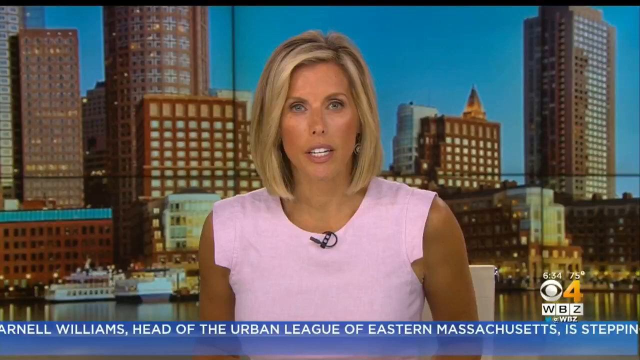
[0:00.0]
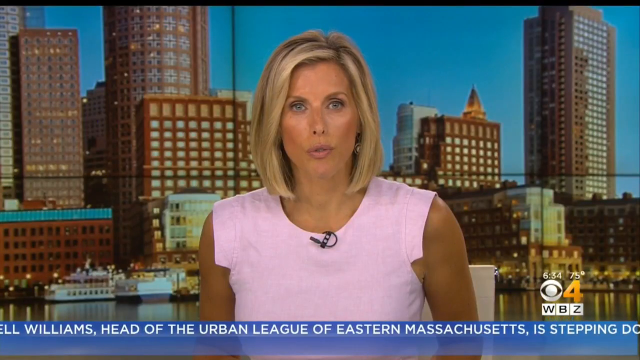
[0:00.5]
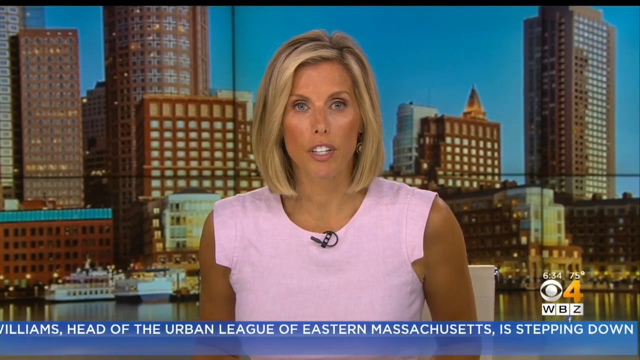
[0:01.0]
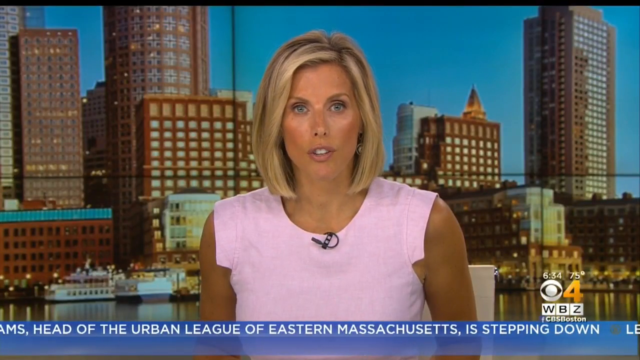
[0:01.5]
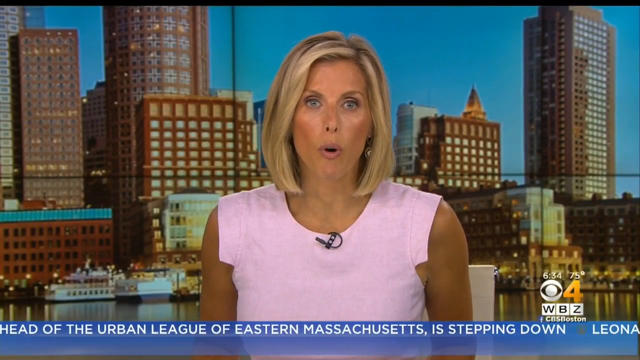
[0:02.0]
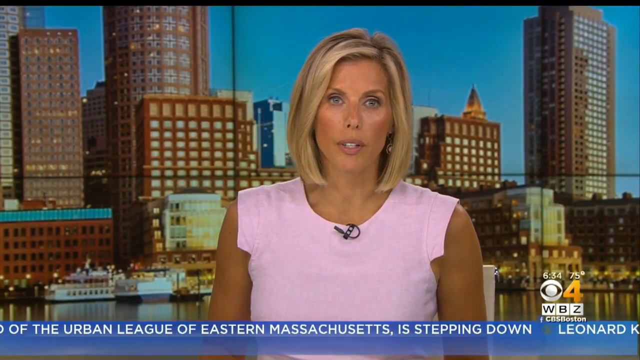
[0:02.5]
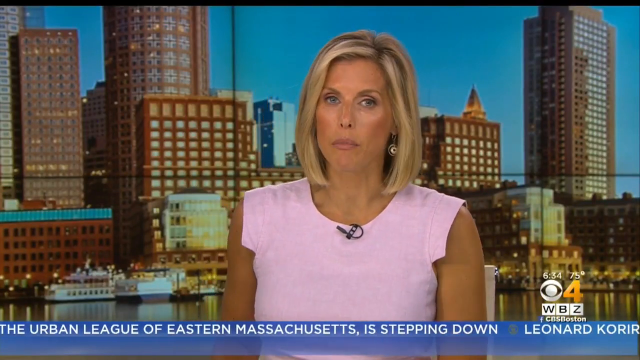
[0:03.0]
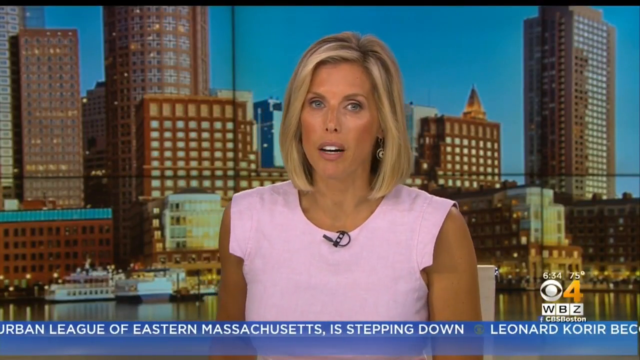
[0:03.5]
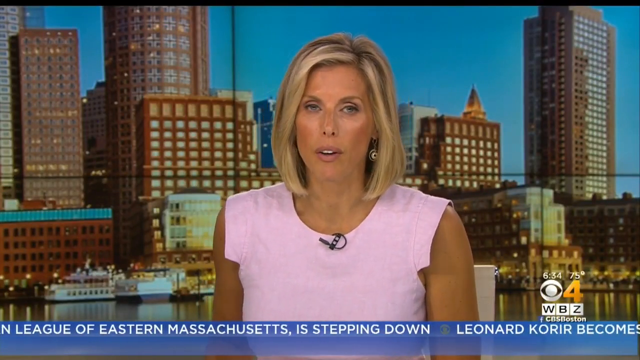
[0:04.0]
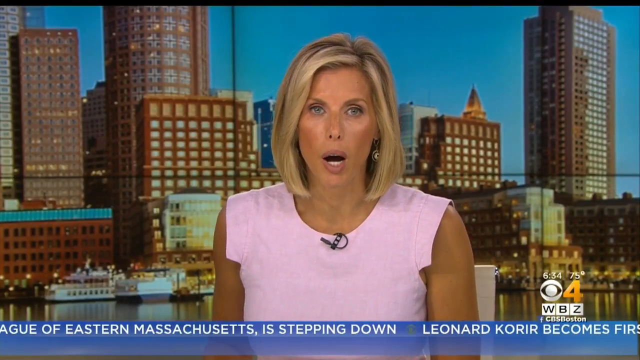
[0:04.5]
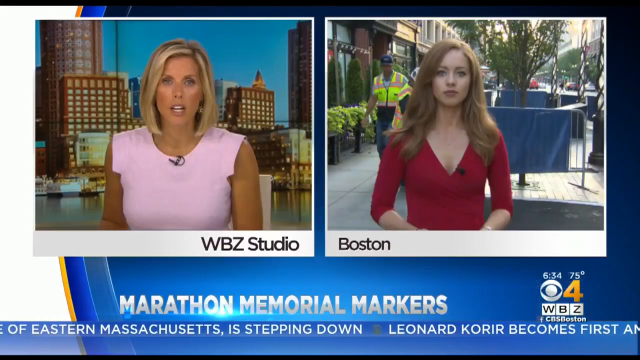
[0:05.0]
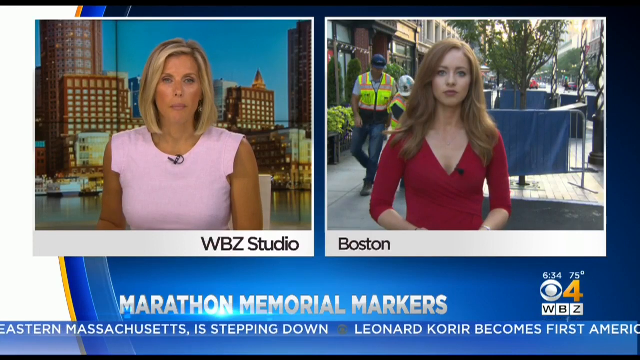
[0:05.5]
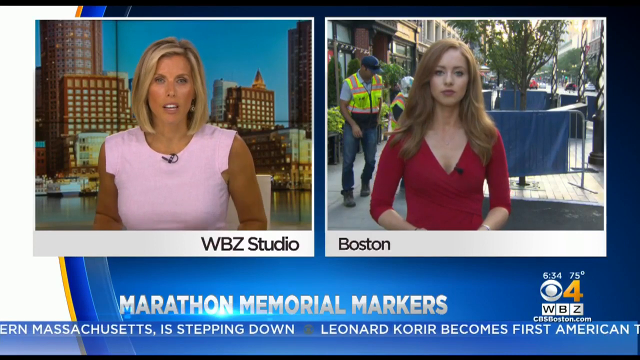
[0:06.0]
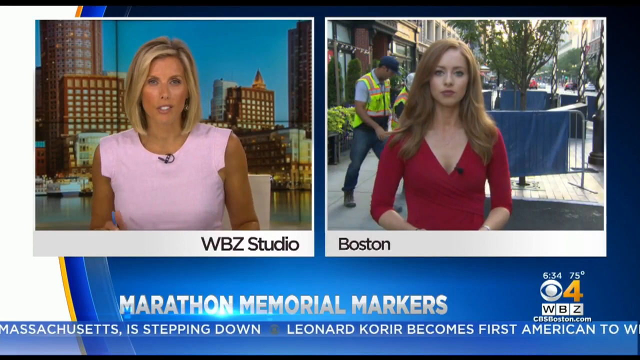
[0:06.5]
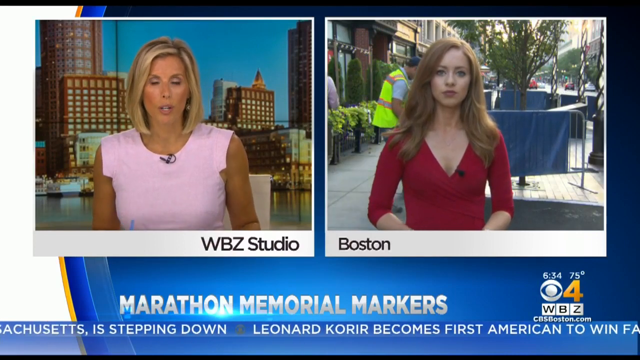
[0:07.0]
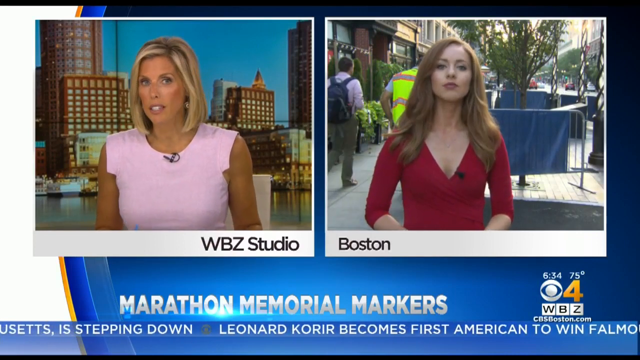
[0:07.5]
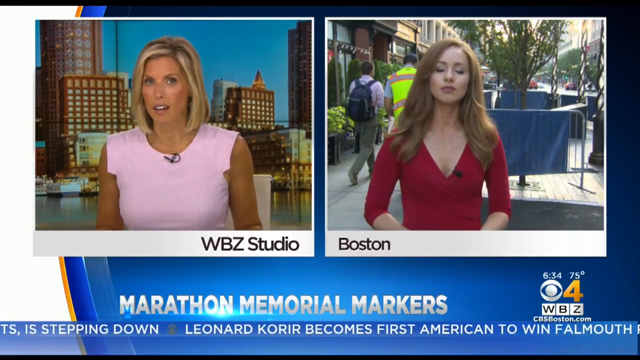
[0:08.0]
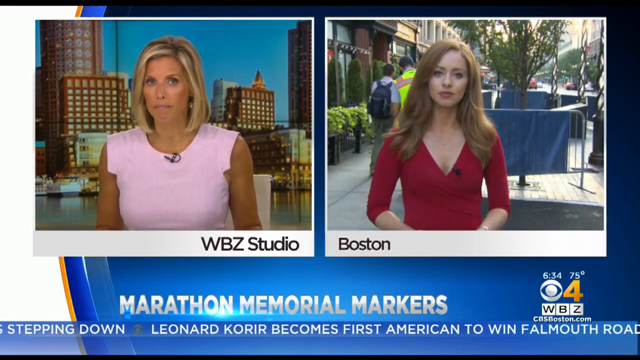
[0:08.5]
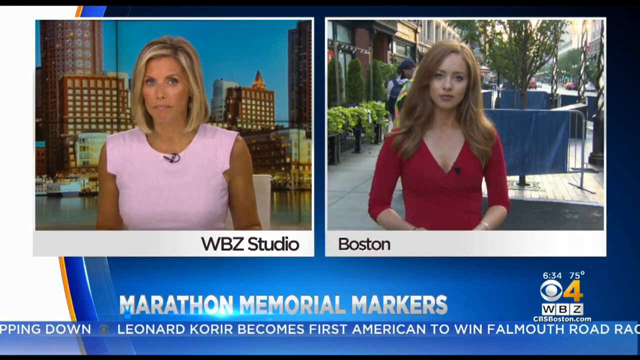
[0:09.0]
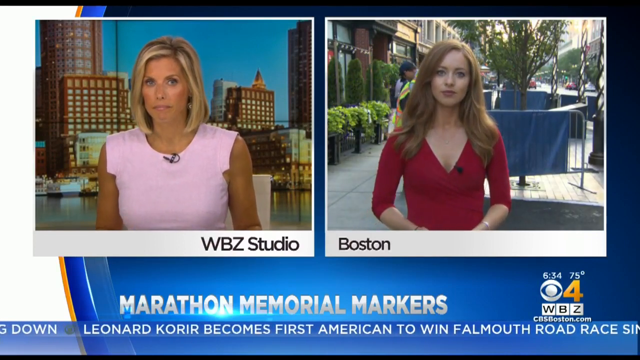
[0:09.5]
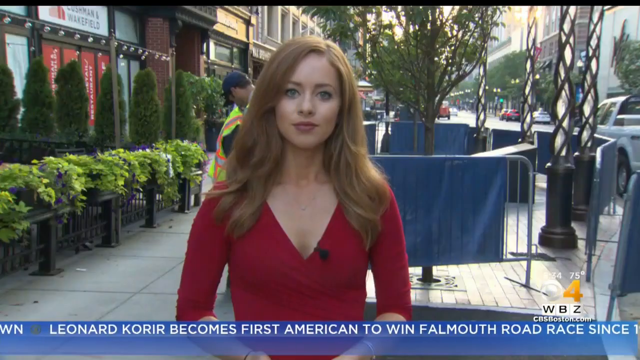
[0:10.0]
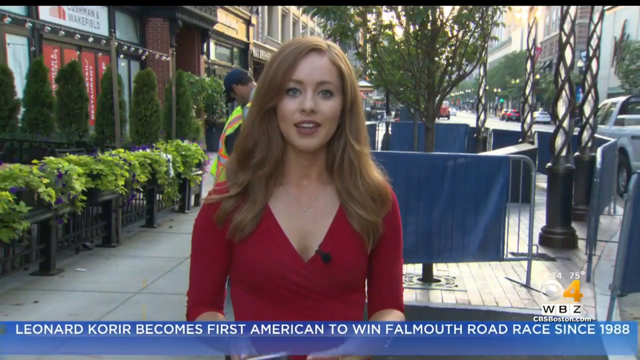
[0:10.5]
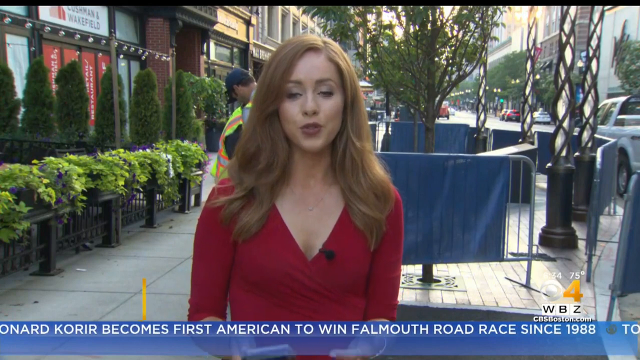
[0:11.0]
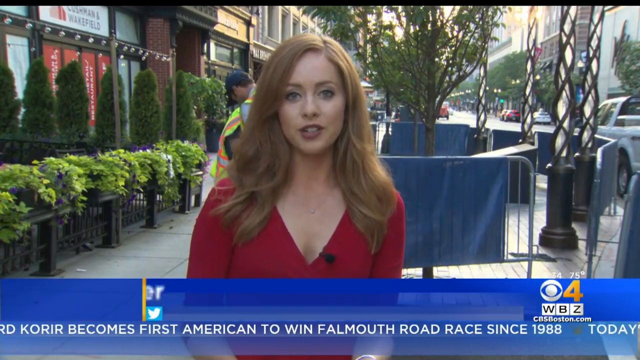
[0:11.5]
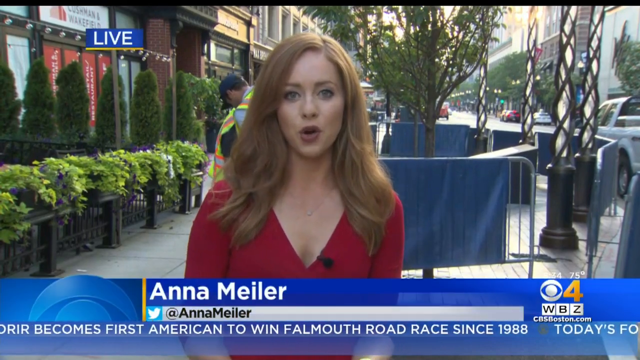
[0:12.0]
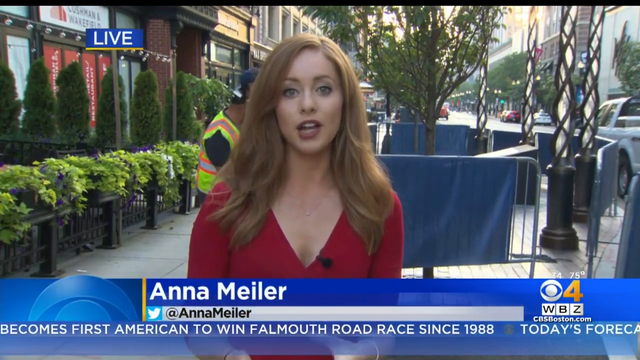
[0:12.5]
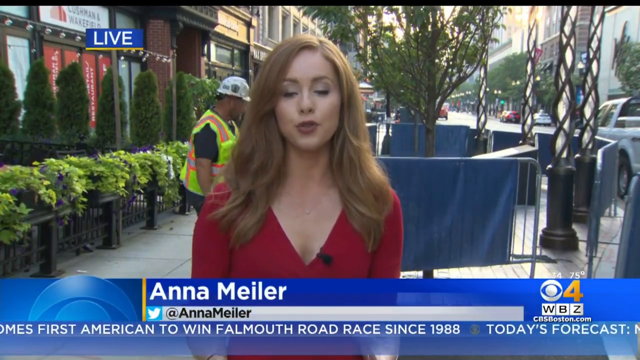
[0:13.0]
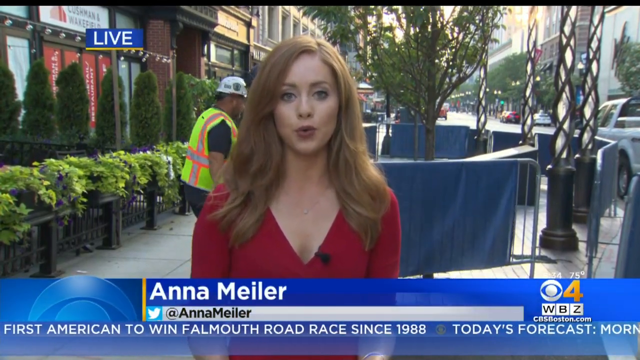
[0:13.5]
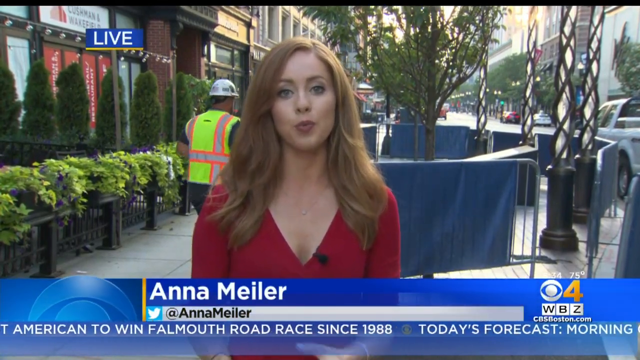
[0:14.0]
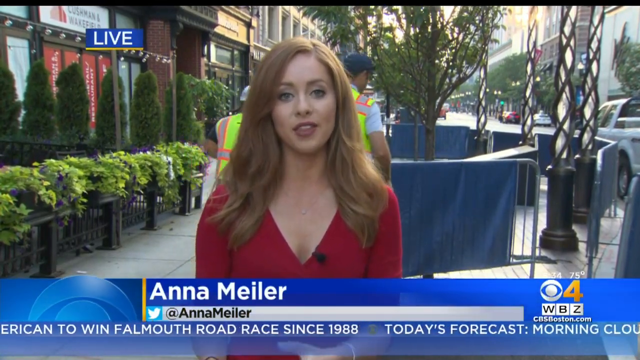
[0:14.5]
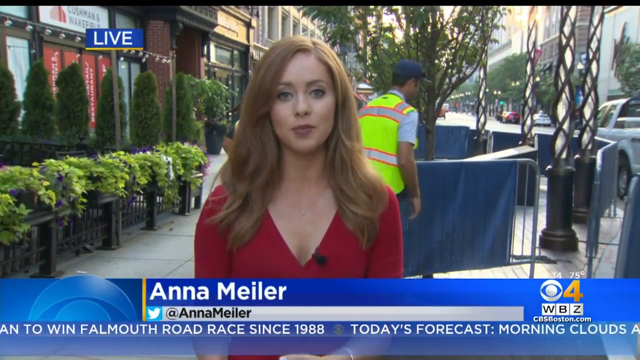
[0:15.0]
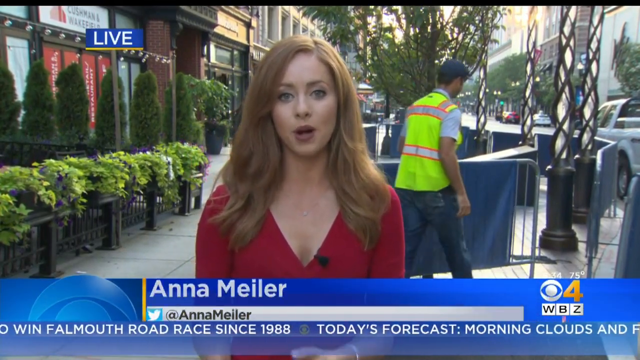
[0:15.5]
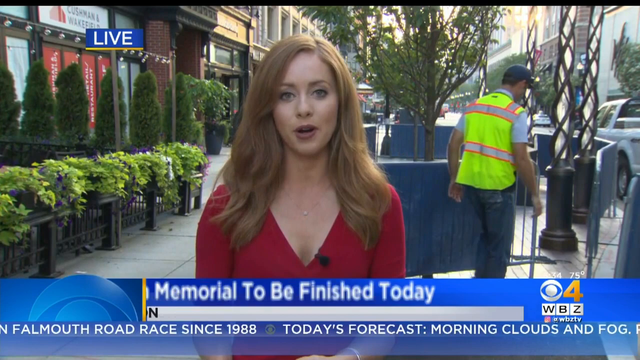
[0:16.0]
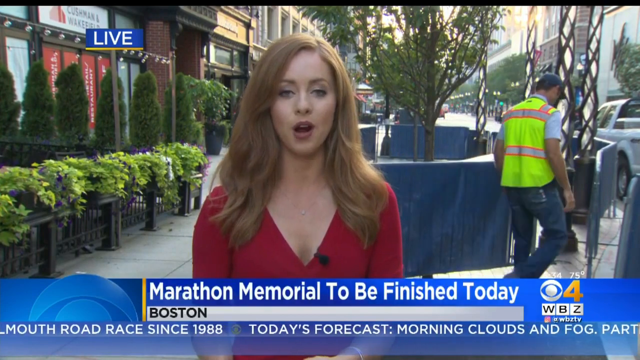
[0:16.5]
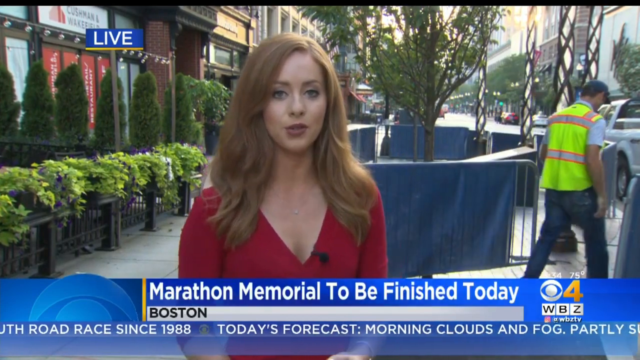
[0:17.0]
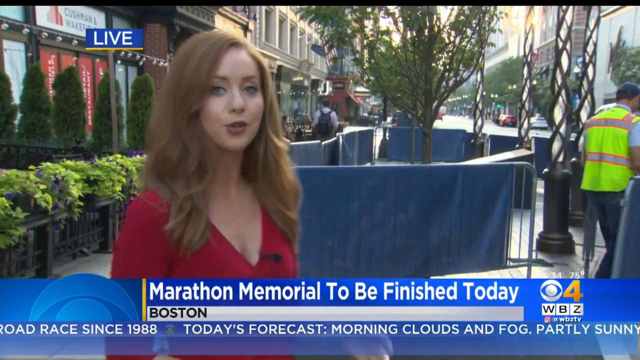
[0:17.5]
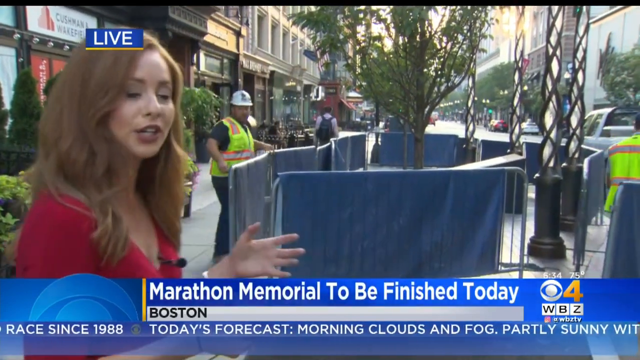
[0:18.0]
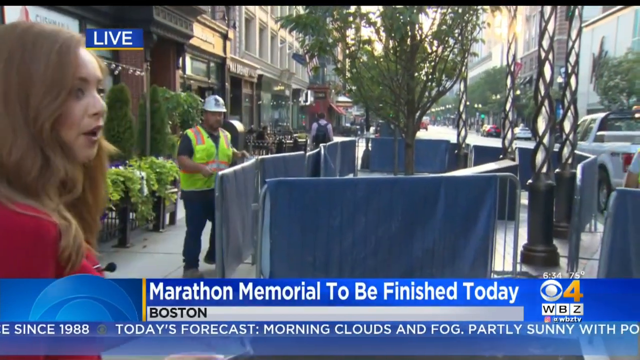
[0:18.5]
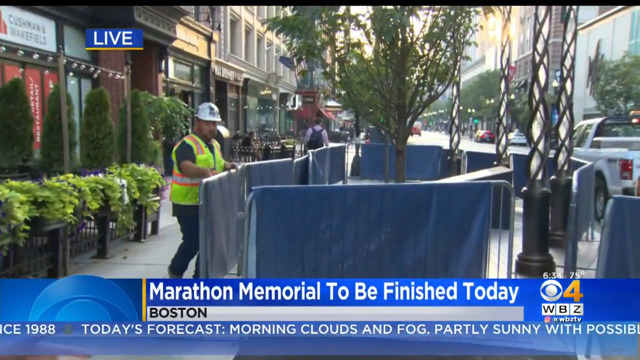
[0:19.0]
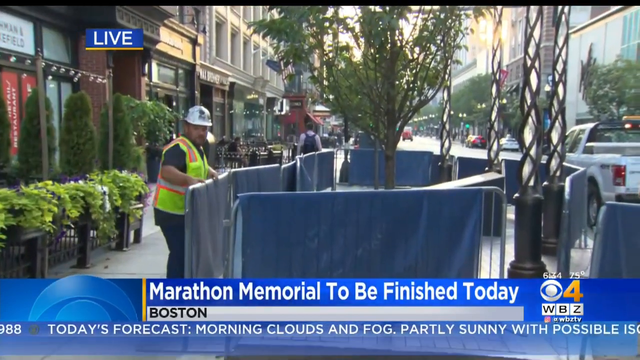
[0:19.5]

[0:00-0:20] The video opens in the WBCT studio, where a woman, Anna Maynard, joins the broadcast live in a news report about a marathon memorial to be finished today. The area is Boston, and many very large multi-storey buildings with lighting are visible.